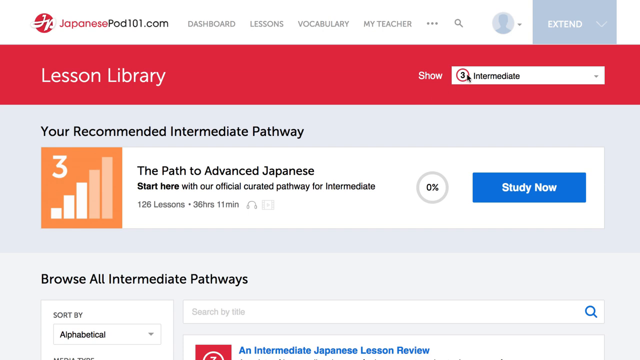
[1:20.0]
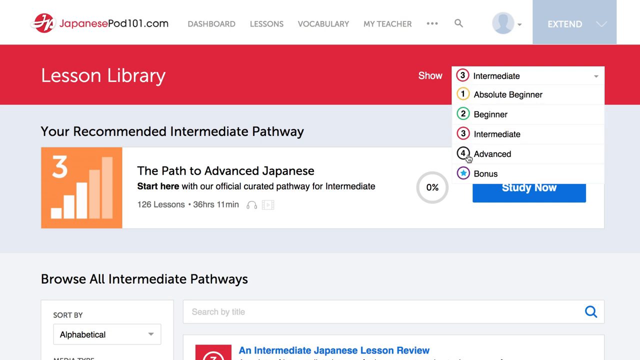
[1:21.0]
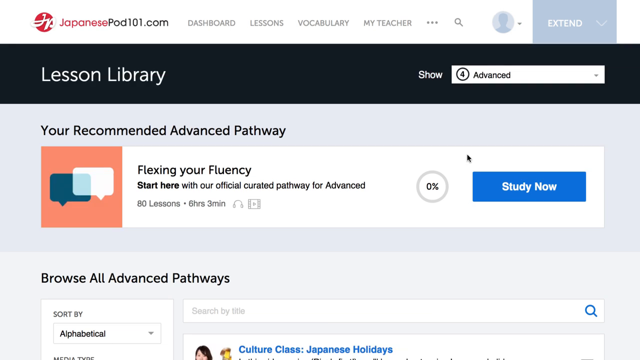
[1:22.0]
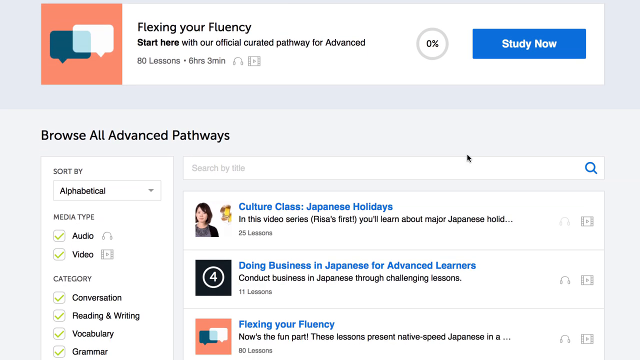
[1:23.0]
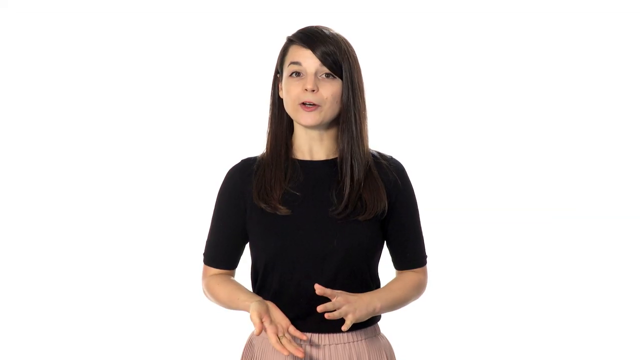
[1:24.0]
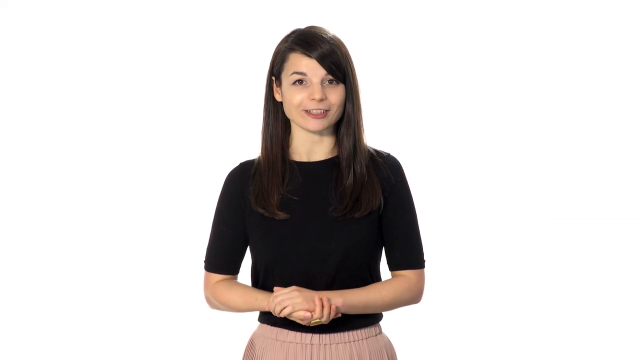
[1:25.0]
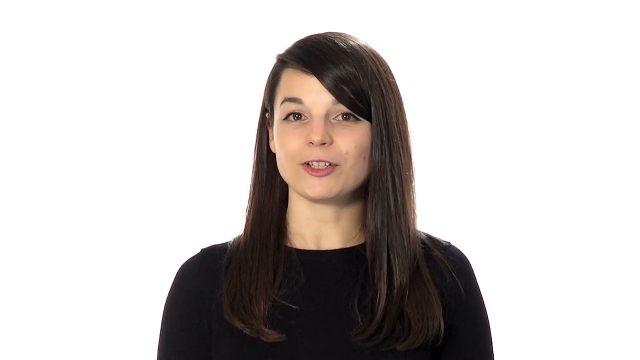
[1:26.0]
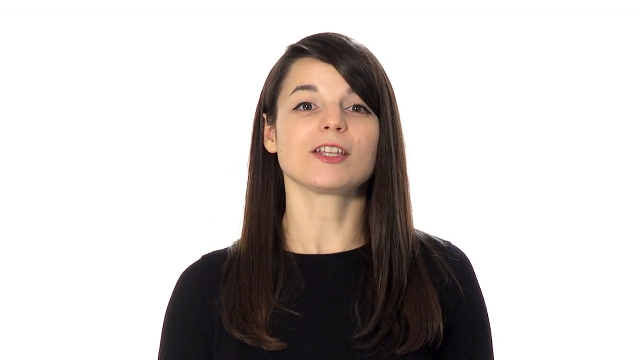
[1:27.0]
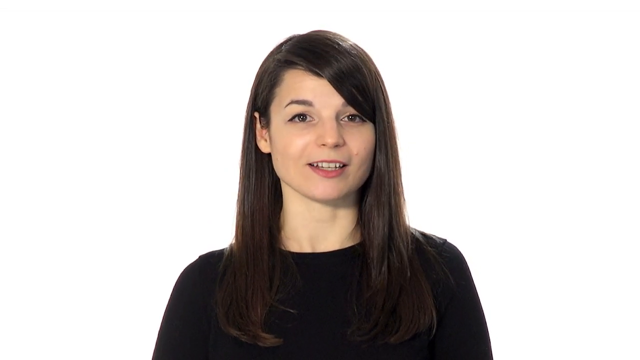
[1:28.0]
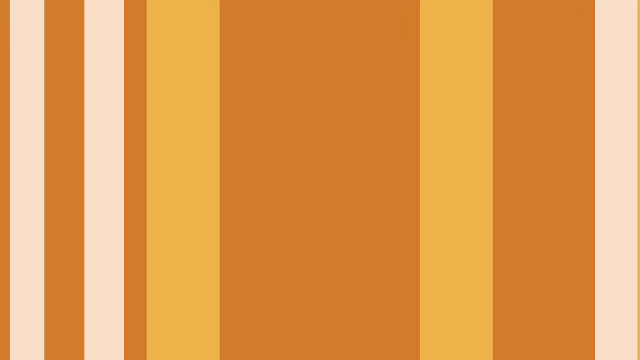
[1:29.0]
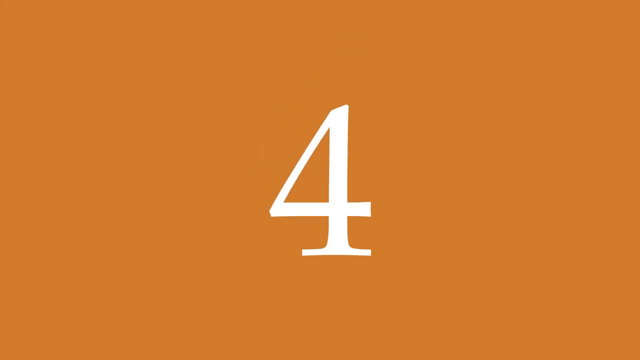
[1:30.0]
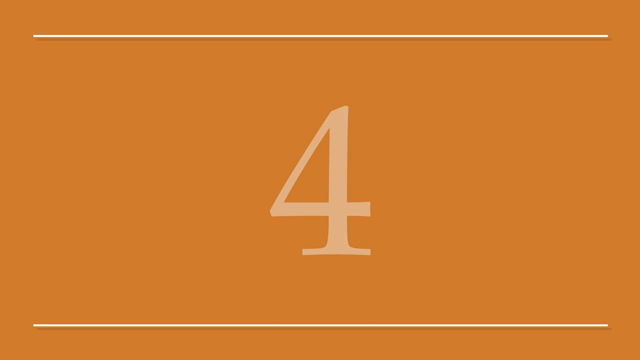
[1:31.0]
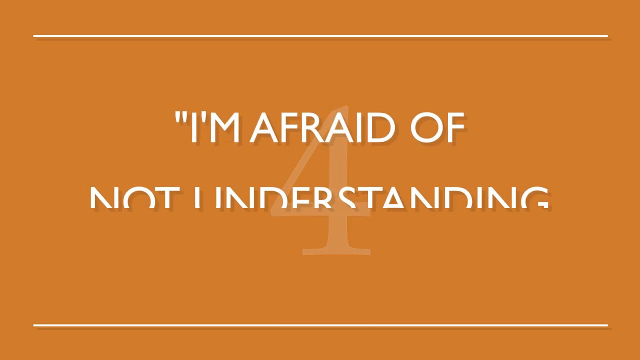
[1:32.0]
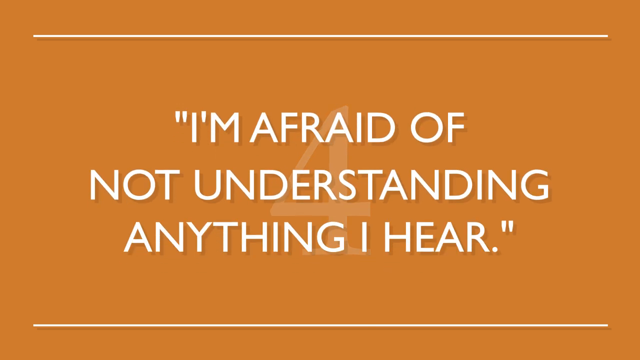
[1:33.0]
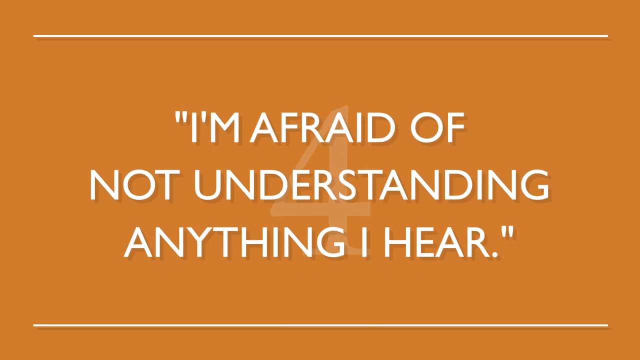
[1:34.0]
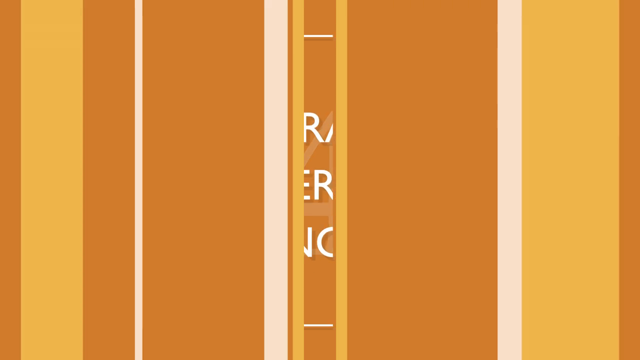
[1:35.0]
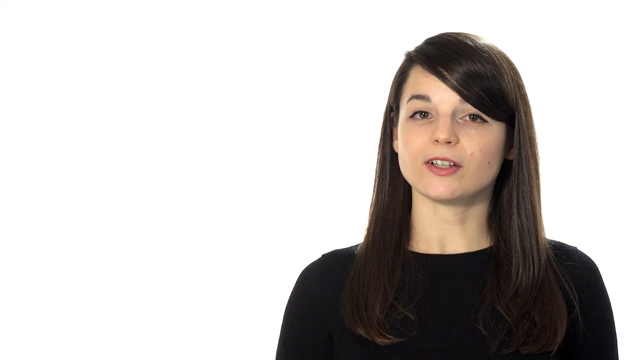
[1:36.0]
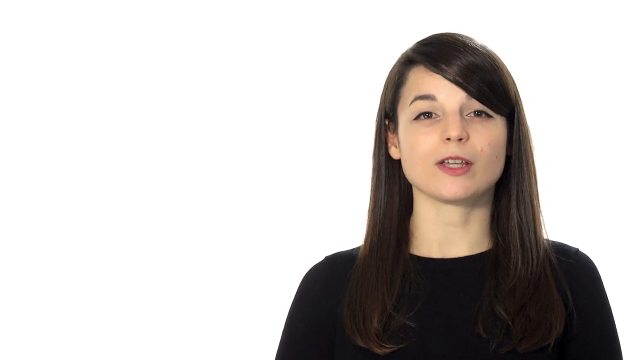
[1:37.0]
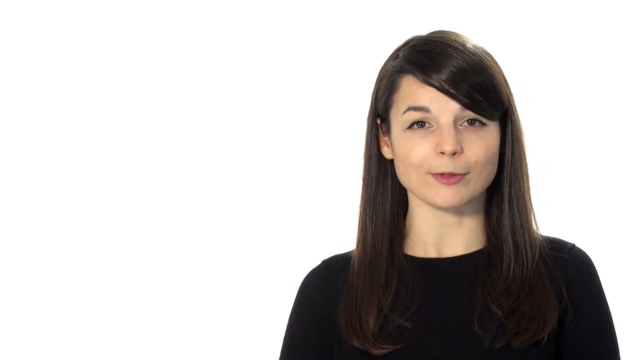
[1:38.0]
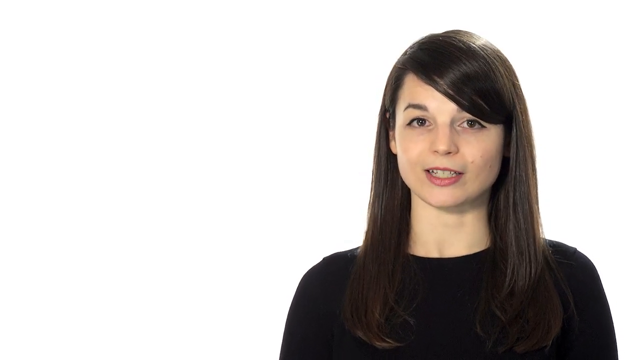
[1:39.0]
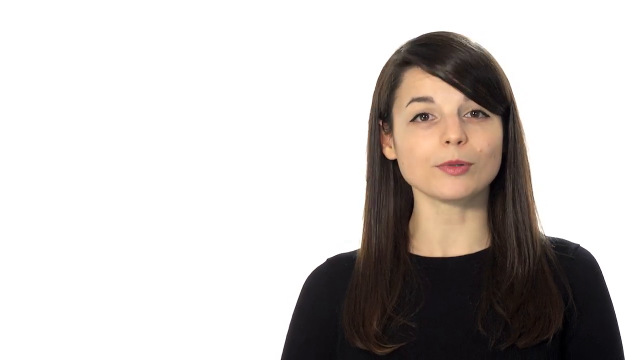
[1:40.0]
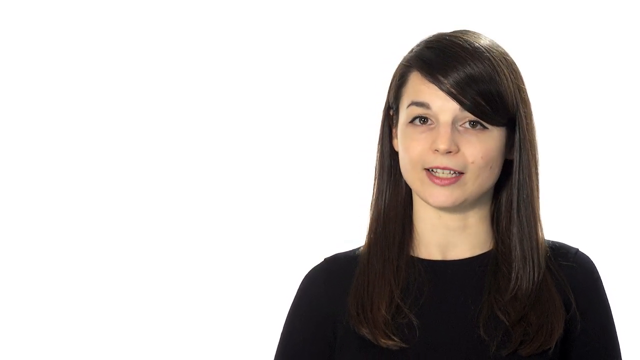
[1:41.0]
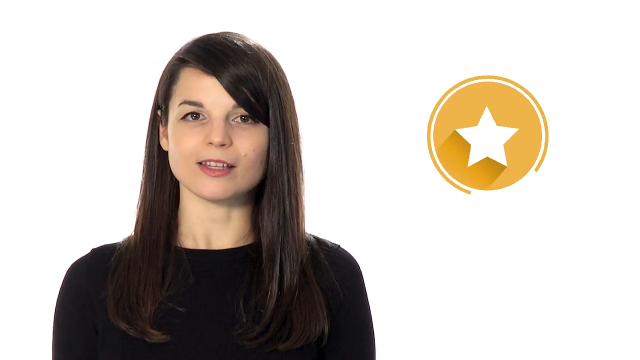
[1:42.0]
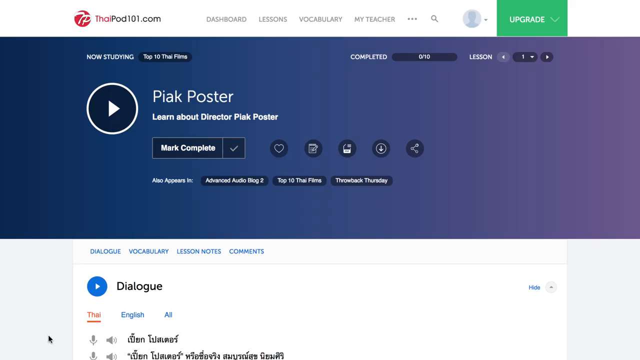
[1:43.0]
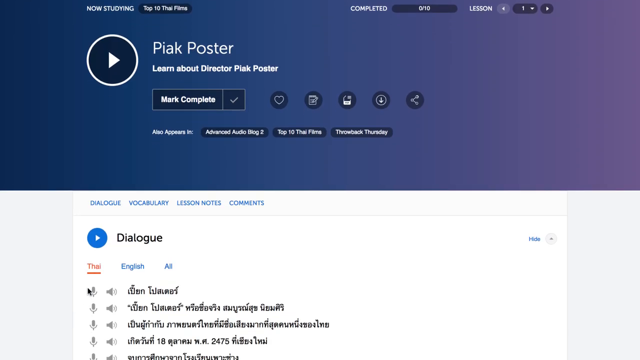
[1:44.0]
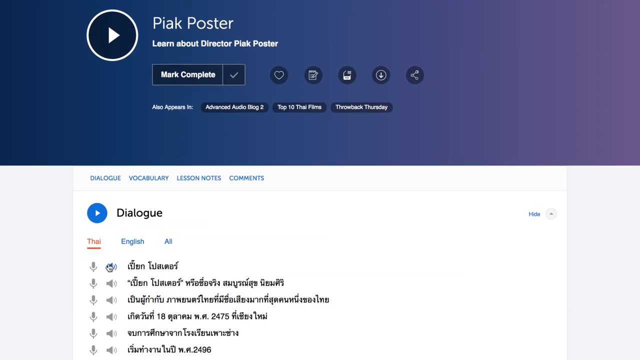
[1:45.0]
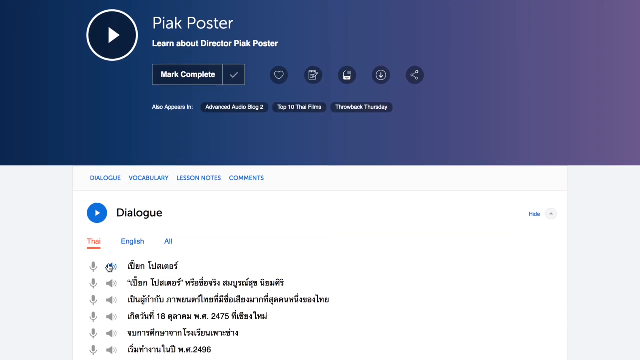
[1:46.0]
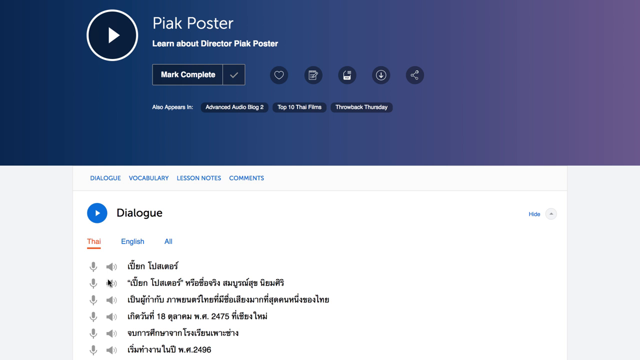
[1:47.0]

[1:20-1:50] The user clicks on the show drop-down menu, moves the mouse down to level 4, advanced, and clicks it, changing the screen to a black theme instead of red. The view then zooms down, revealing different recommendations and a browse all advanced pathway section. The video fades and cuts to the woman speaking in the center of the screen against the white background, and it zooms in slightly on her. Orange lines come across the screen and transition to a dark orange screen with the number 4 at the top, and a quote appears in front: "I'm afraid of not understanding anything I hear." Orange lines block the text and transition back to the white screen, where the woman is talking on the right side in a close-up. She then switches to the left side, and an orangey-yellow circle appears on the right with an animated spinning star in it. The screen cuts to another website, thaipod101.com, showing a play button with "now studying" above it and a dialogue below made up of sentences that can be clicked. The mouse moves down and clicks on a few of them.